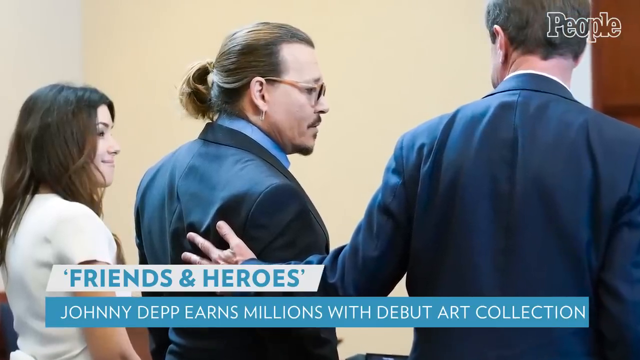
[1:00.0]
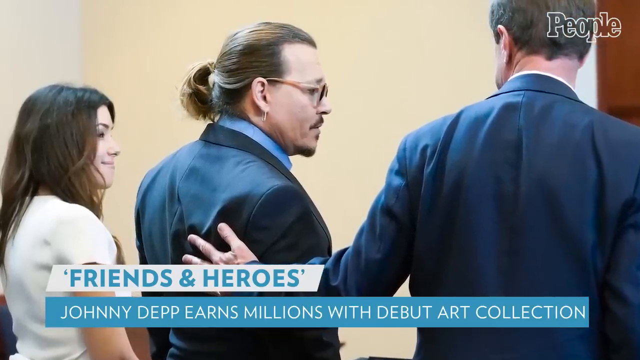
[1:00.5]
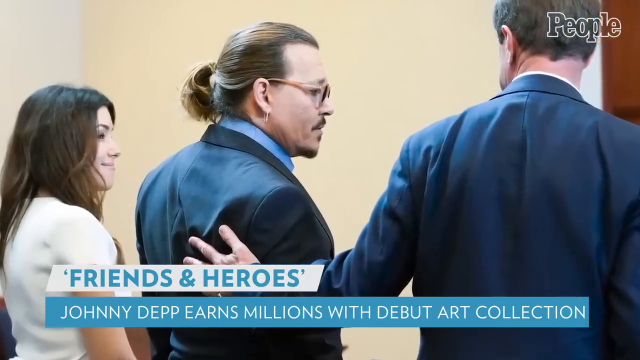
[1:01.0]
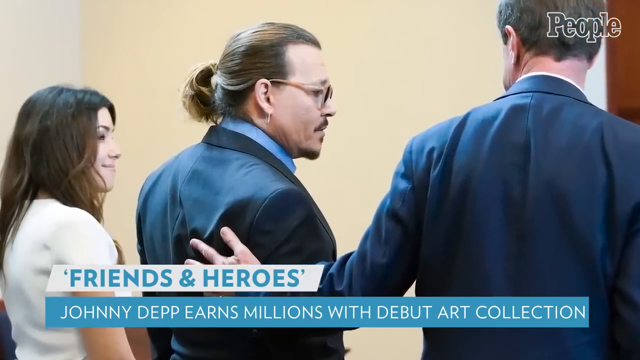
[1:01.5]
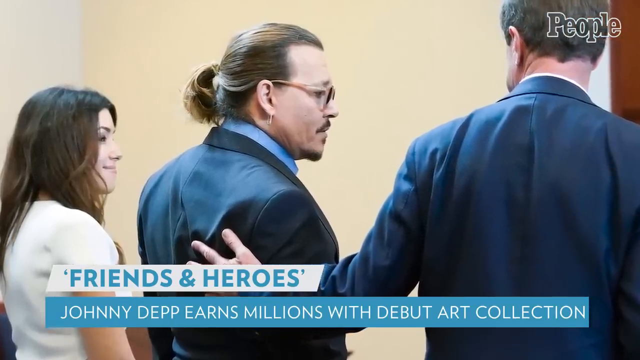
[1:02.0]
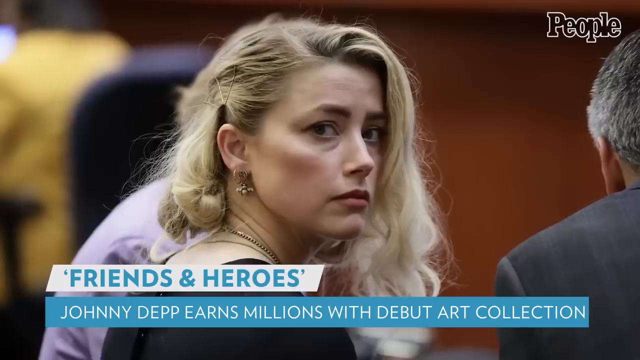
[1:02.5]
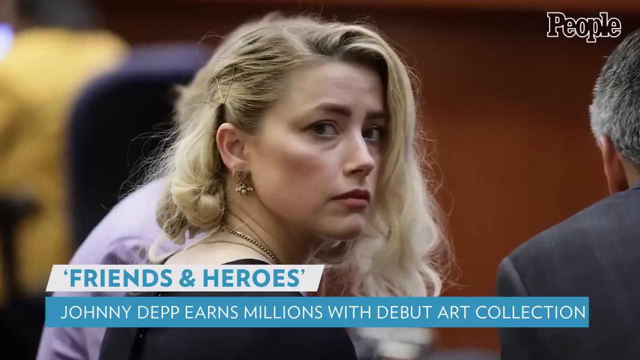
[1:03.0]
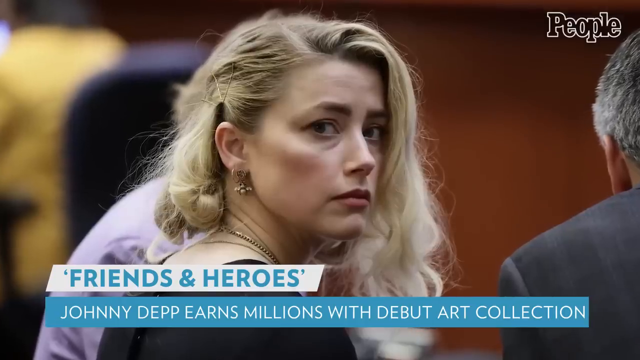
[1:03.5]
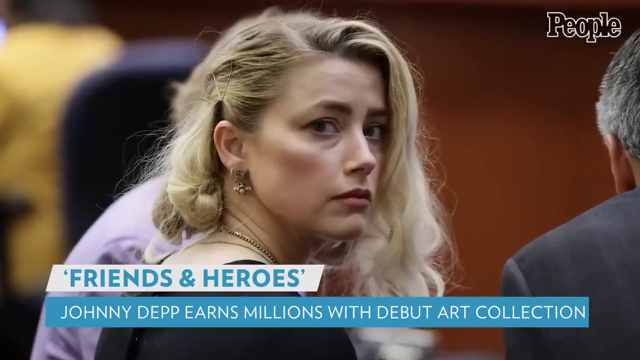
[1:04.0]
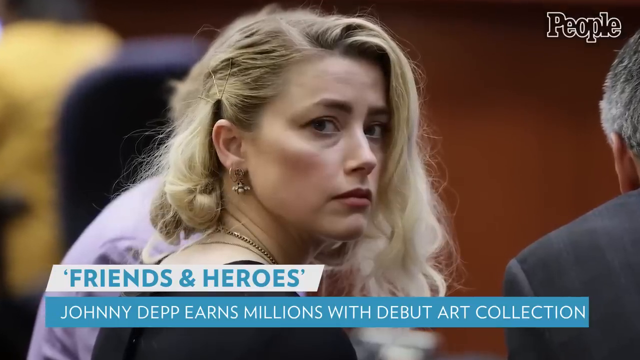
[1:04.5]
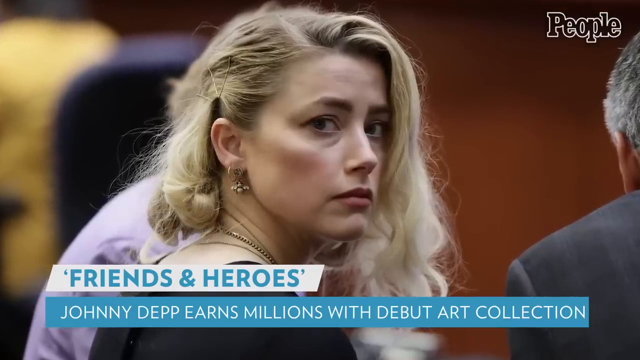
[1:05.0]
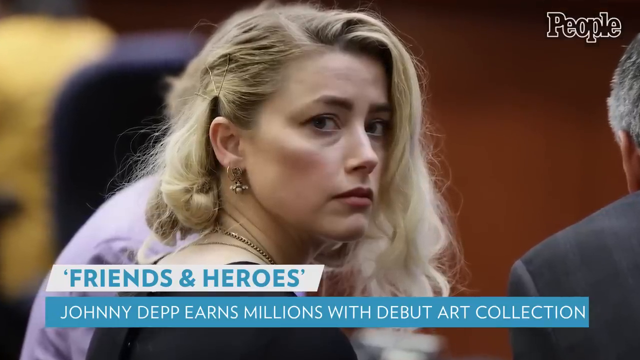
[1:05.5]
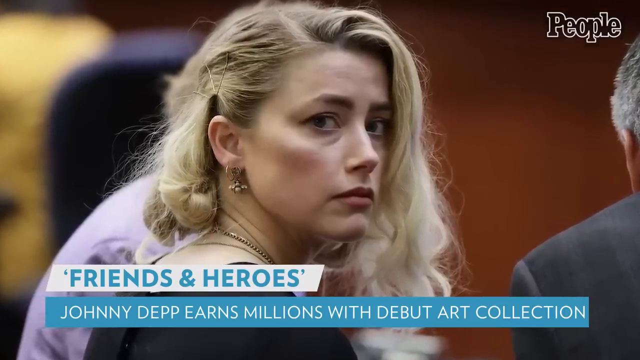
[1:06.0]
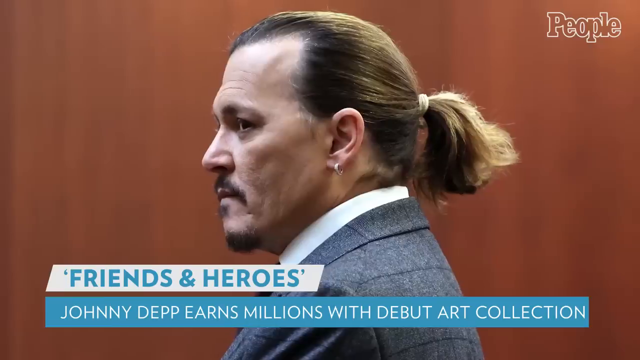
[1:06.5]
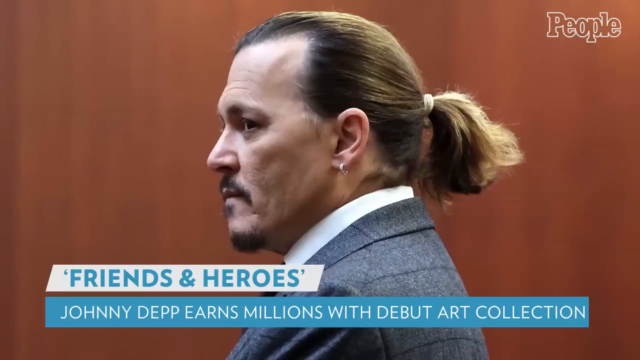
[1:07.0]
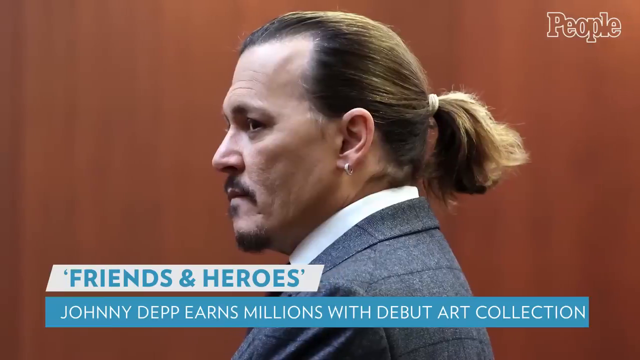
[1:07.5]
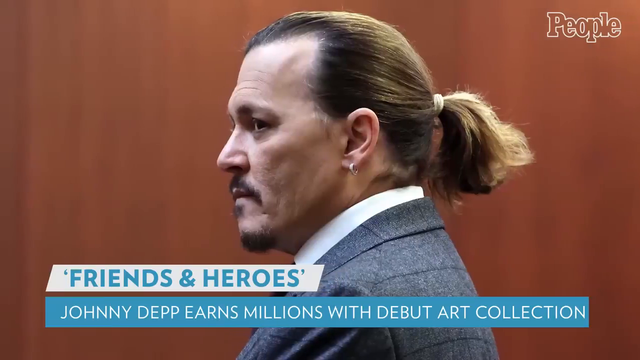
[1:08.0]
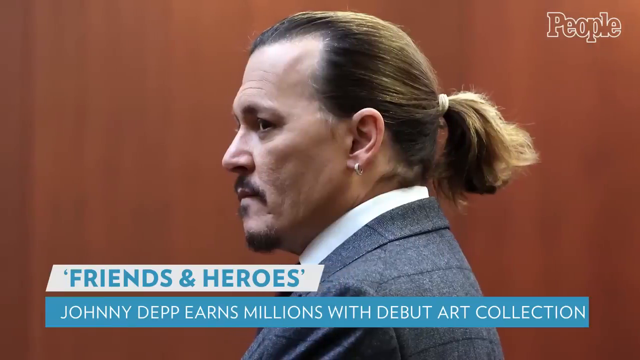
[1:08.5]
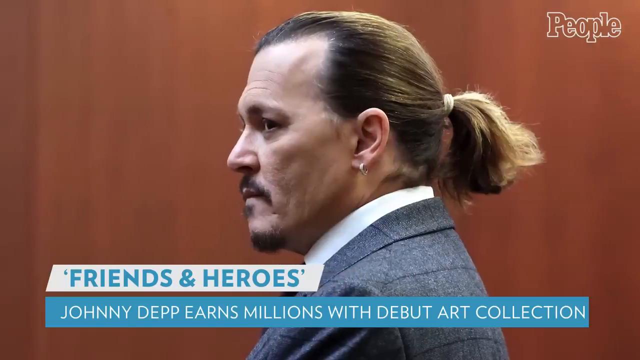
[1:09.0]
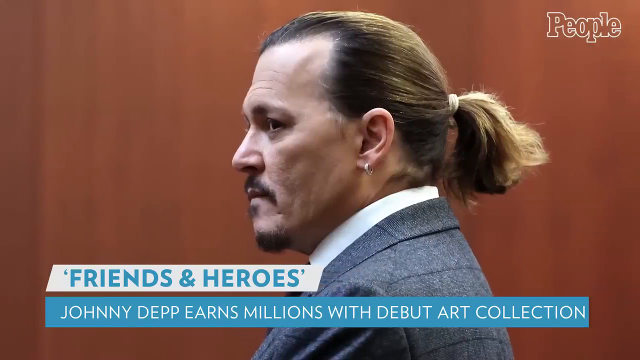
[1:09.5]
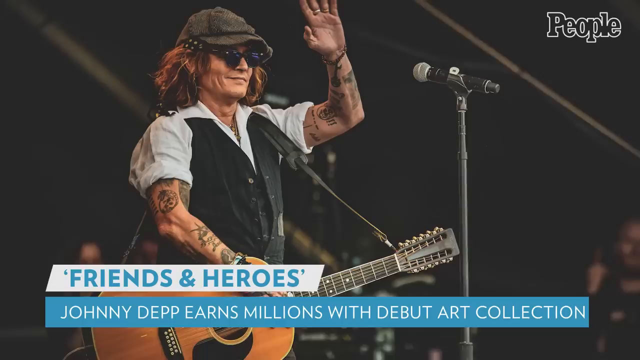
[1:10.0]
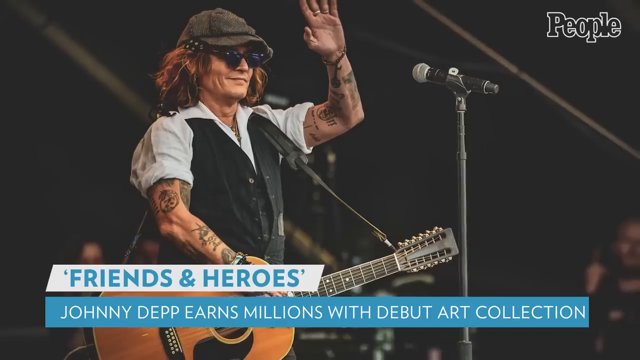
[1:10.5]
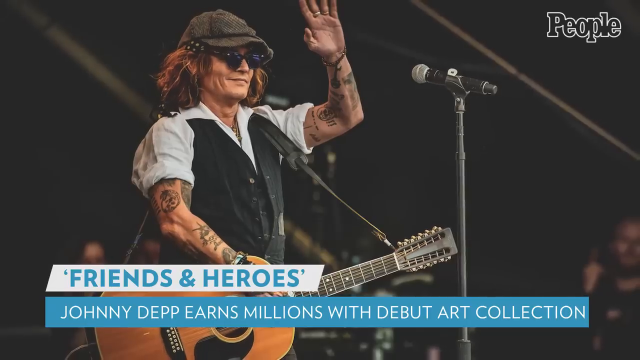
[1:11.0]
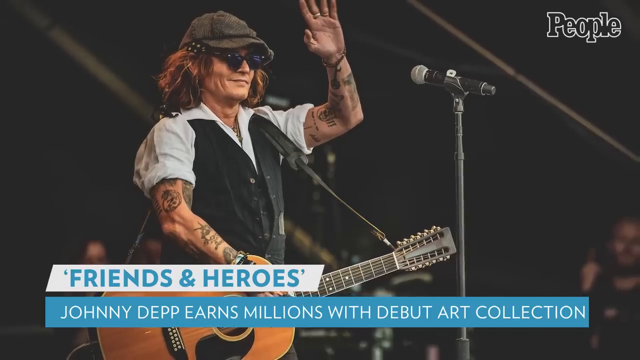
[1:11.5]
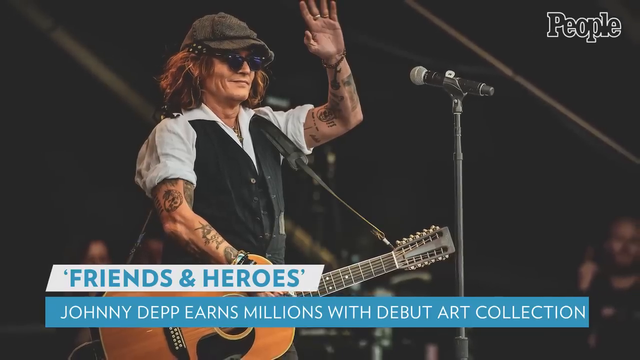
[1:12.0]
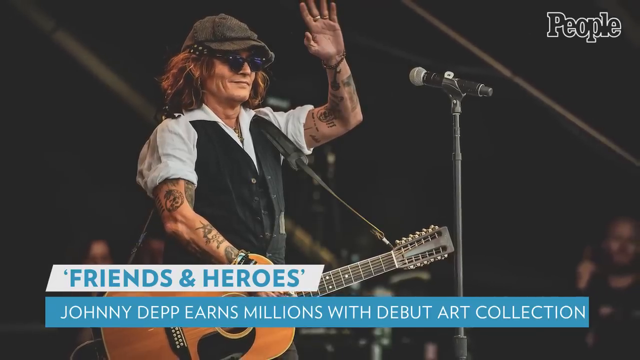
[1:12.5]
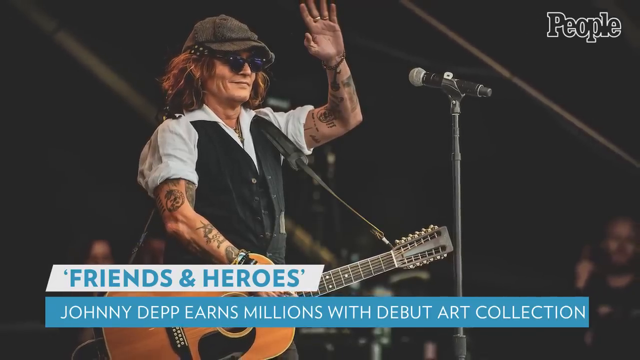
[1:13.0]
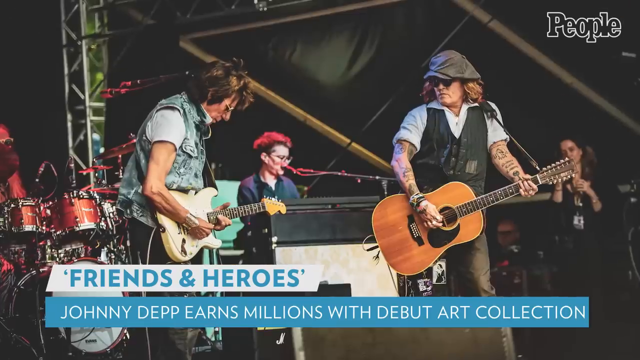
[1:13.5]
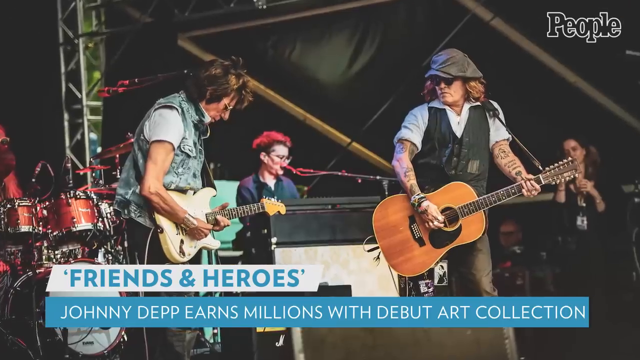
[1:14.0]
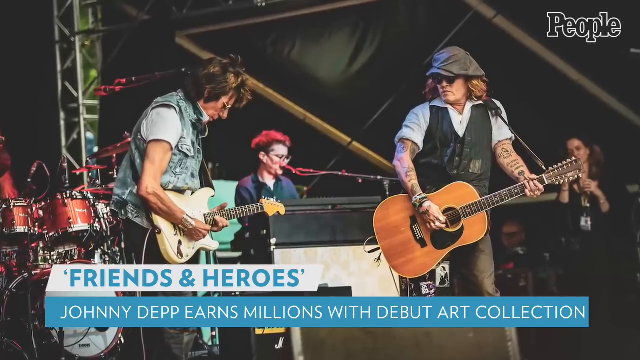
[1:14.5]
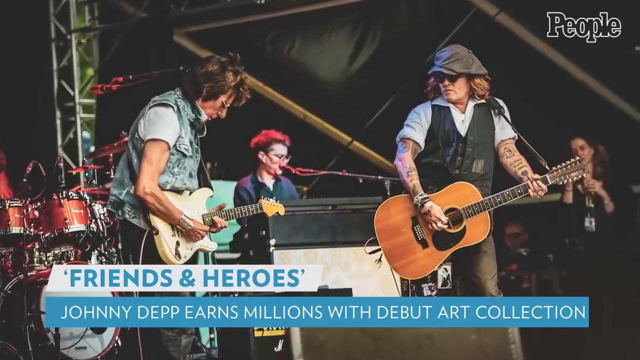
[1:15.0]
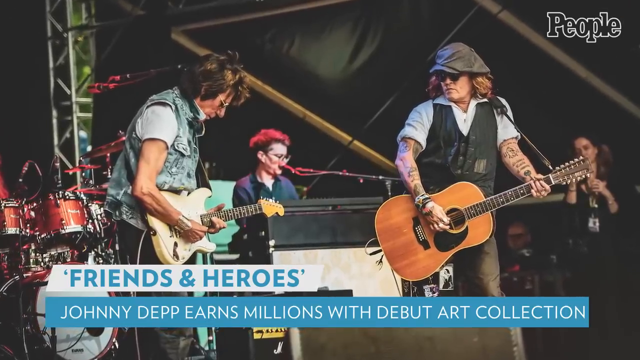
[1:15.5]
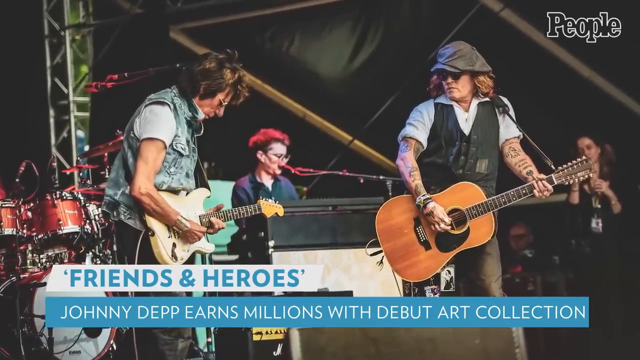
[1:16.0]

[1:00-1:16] A woman with blonde hair looks forward with a serious expression. Someone who appears to be beside her looks in the opposite direction and wears a gray suit, and there is a brown background behind them. The image moves slowly; at the bottom, a white banner with blue writing reads "Friends and Heroes," and below it a blue label with white writing reads "Johnny Depp earns millions with debut art collection." The word "people" is in the upper right corner. The image slowly moves into the next one, showing a man with brown hair pulled back, wearing a gray suit and standing in front of a brown background, with the same labels. The video then moves into an image of the same man with his hair down, wearing a white collared shirt and a black vest and holding a guitar, with a microphone in front of him and his arm raised as though he is waving; the same banner and word appear in this image as well.